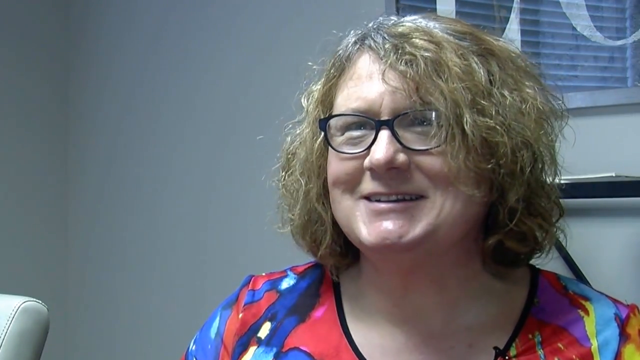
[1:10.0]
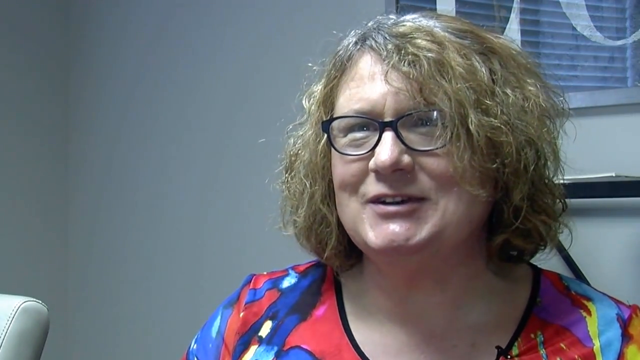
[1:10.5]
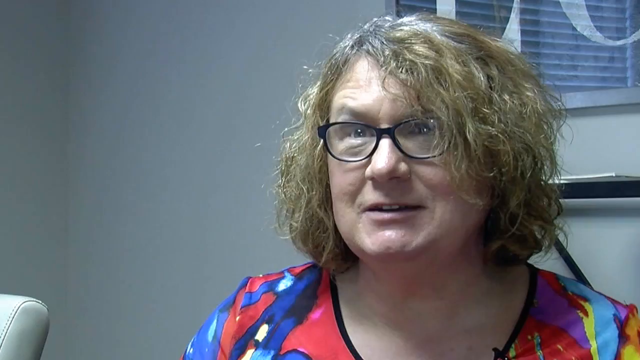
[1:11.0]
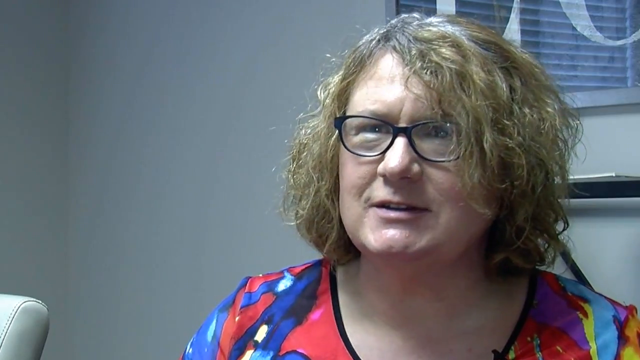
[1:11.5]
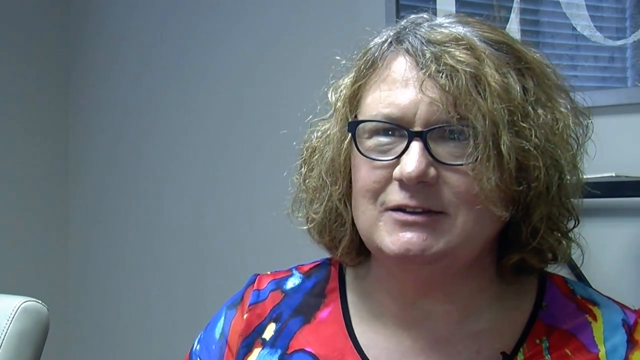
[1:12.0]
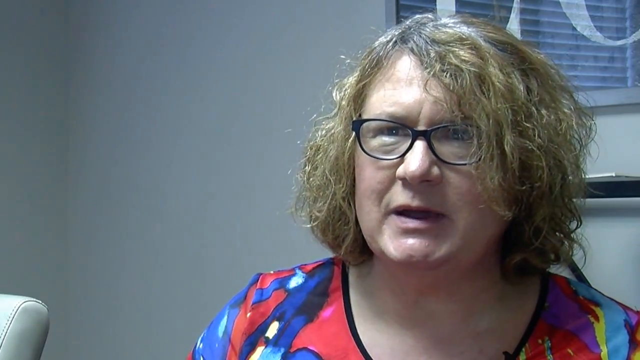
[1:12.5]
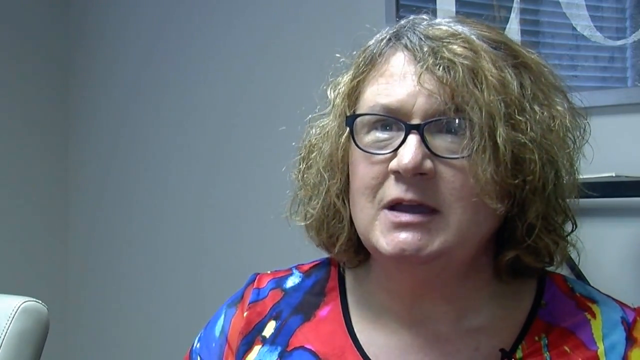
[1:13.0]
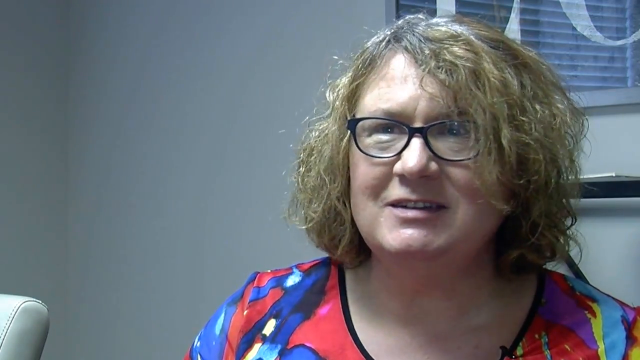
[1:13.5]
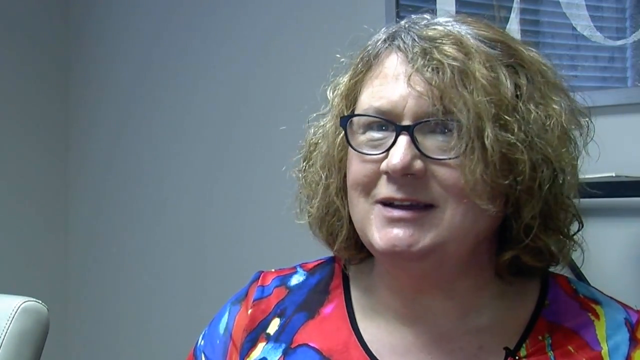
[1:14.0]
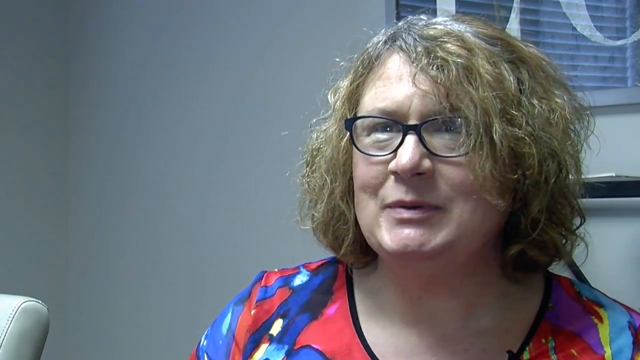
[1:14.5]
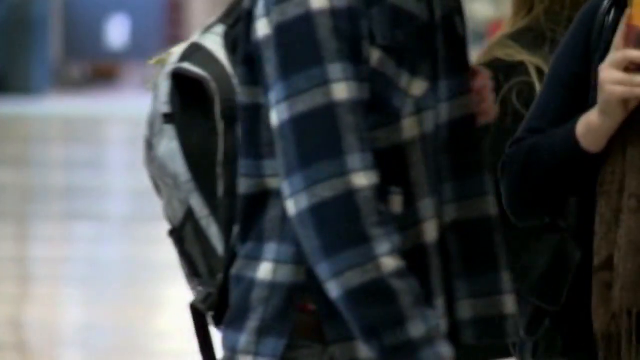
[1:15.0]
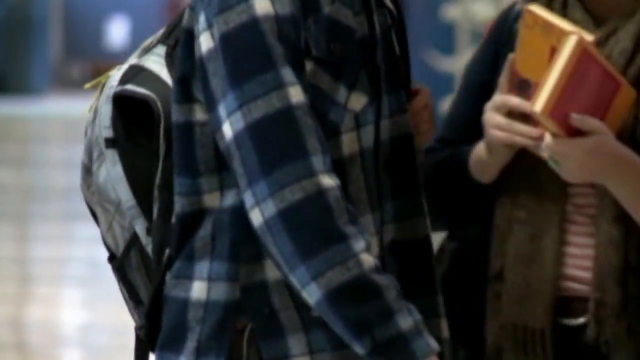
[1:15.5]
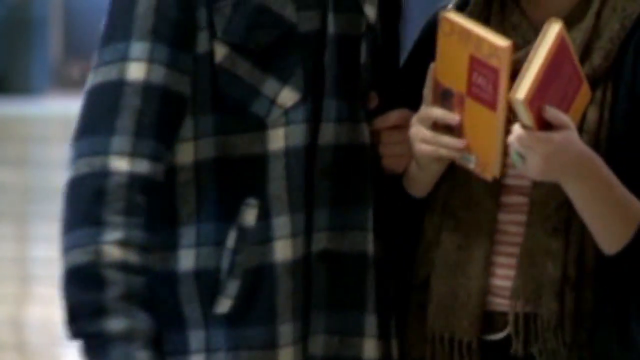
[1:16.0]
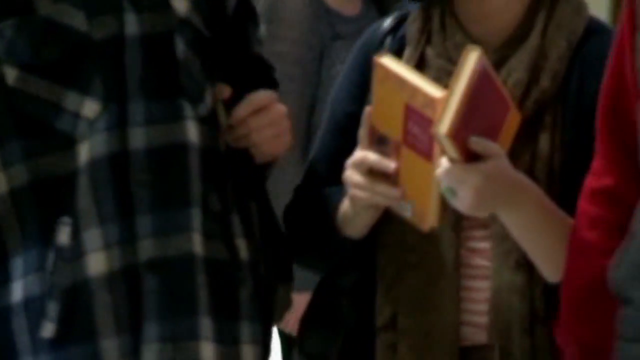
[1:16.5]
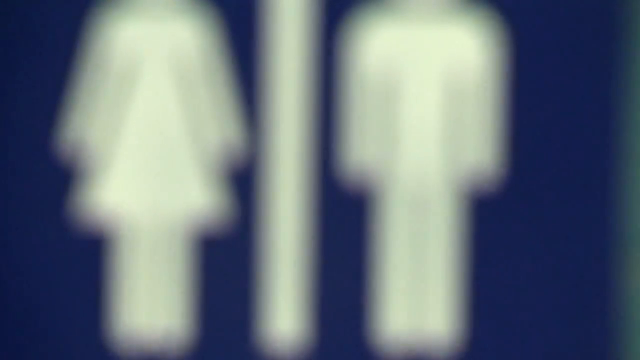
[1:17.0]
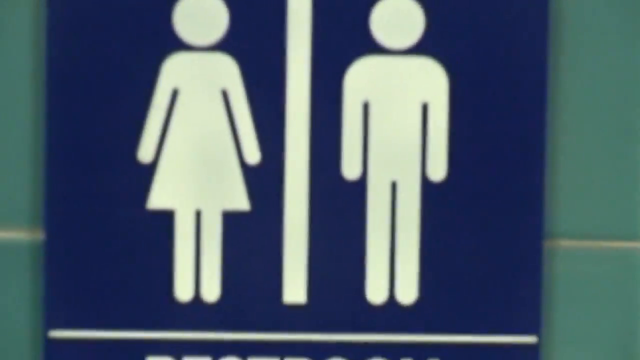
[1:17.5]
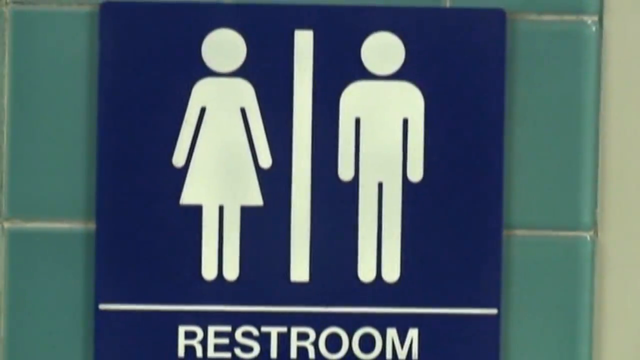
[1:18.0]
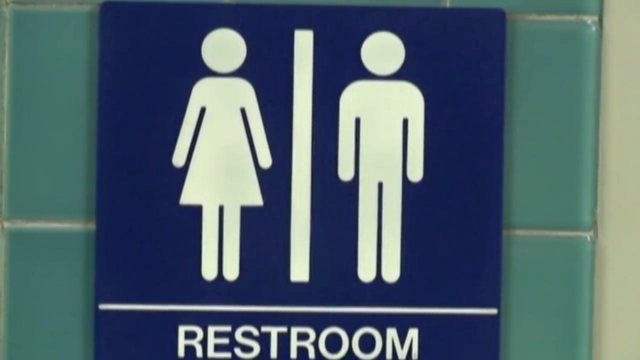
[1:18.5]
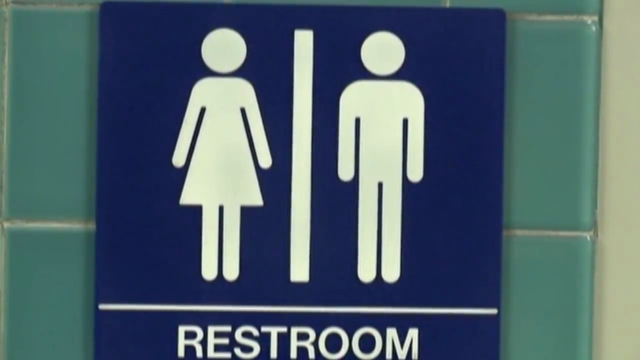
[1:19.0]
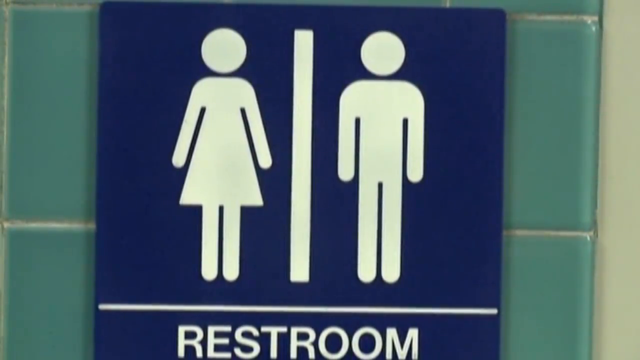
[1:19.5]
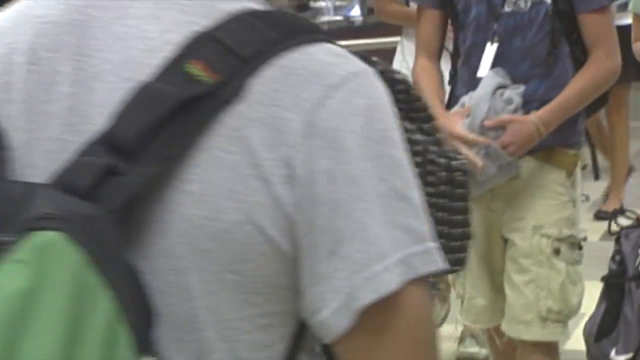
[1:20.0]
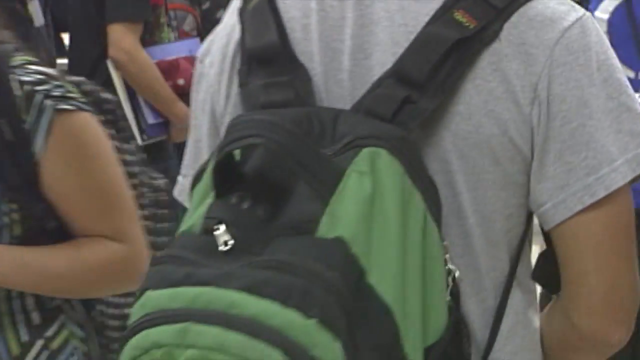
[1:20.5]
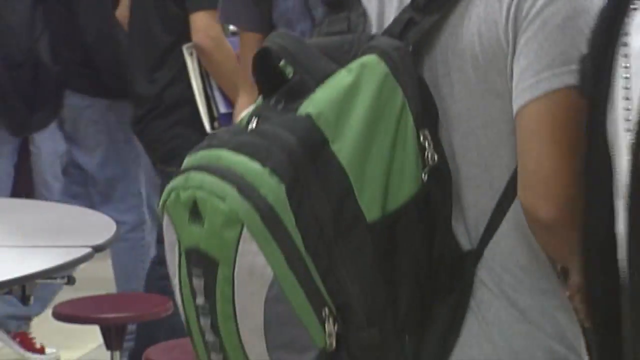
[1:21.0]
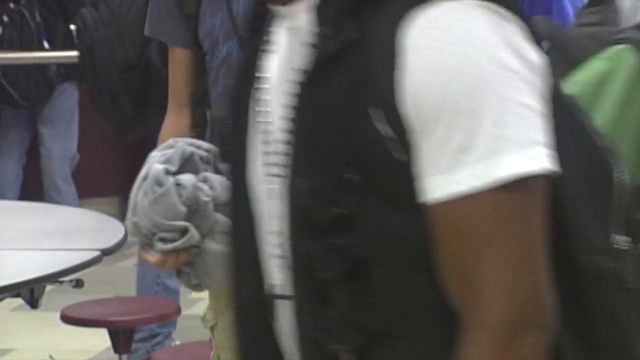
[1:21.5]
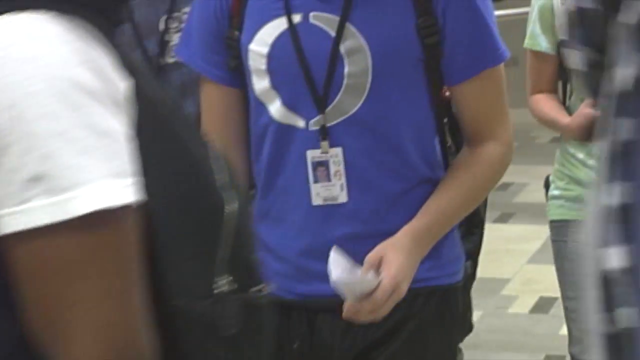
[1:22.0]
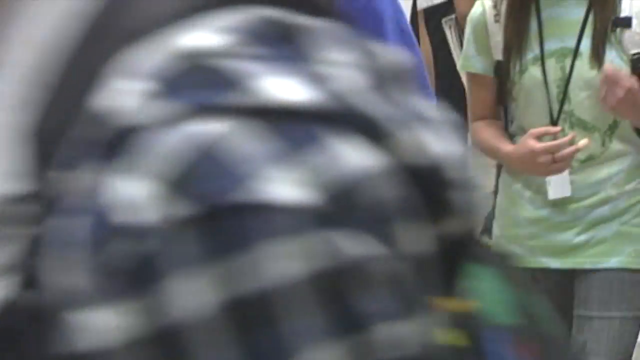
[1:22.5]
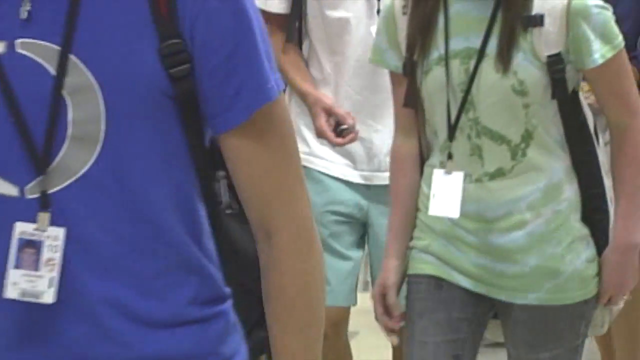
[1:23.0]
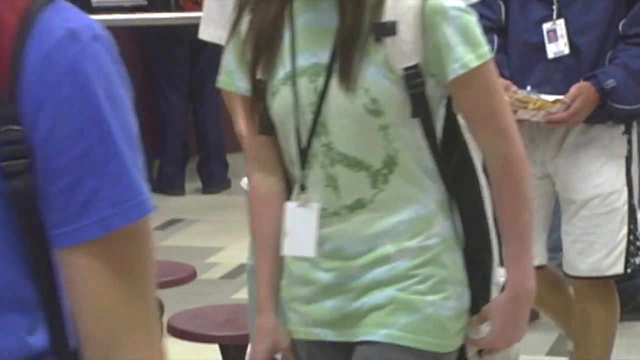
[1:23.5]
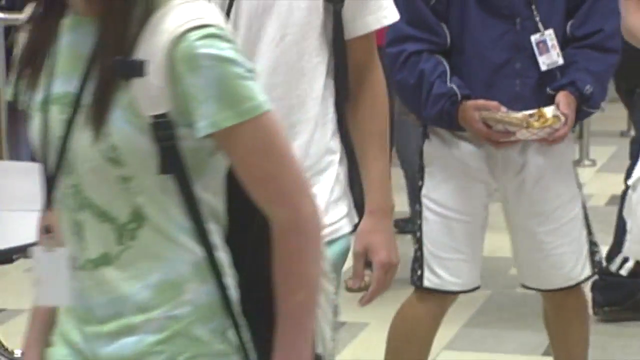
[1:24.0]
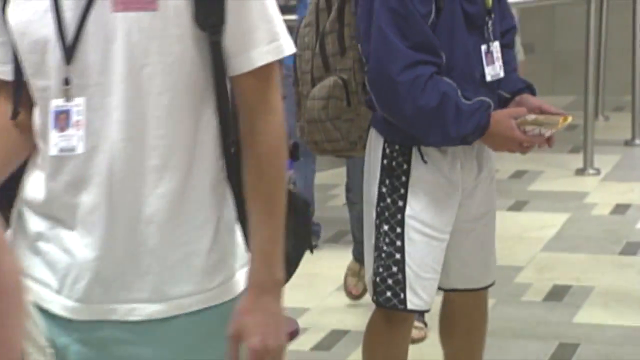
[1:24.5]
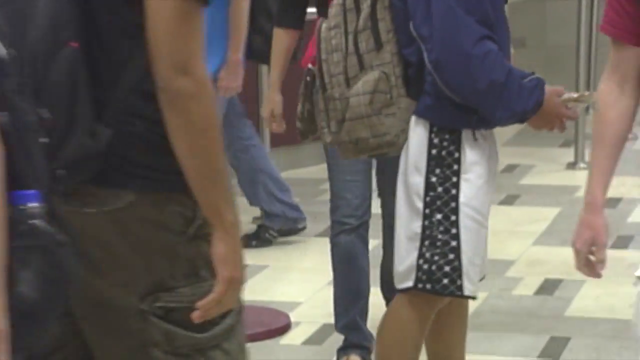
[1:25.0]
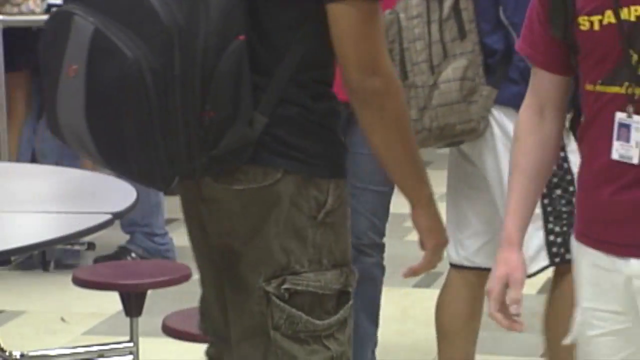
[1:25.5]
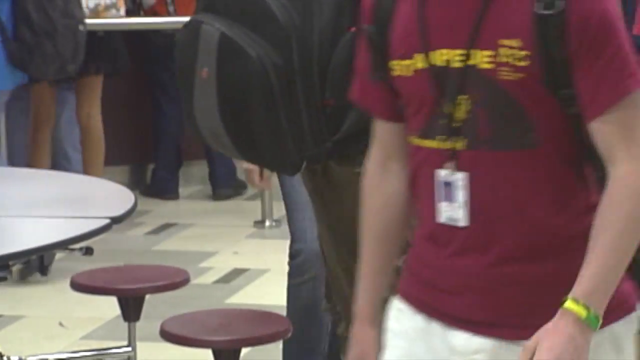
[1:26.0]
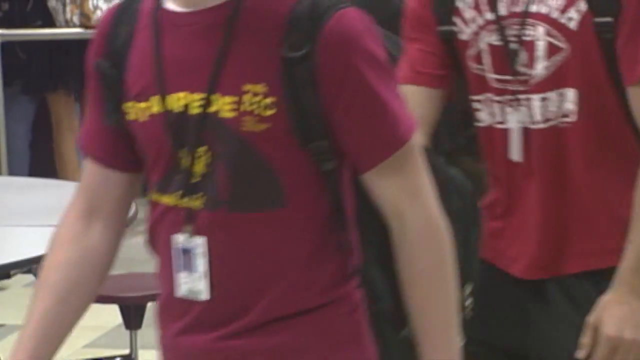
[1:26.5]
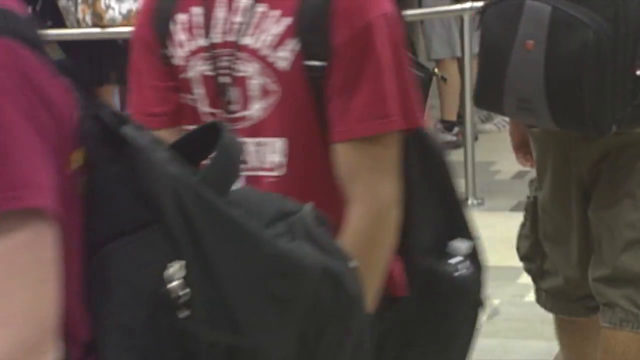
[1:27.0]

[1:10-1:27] The woman with short blonde and gray hair and glasses, in the multicolored shirt, continues talking to the person sitting across from her. The camera cuts to a shot of people walking, apparently in a school, with their heads and legs cropped out. A few people, presumably teenagers, walk wearing backpacks, with only their torsos and arms visible. One carries some books and one wears a blue plaid shirt; the person carrying books wears what looks like a scarf and a sweater. The camera then zooms in again on the restroom sign: the blue sign with male and female silhouettes that says "restroom." Next, there is another shot of people walking around in the school, seen from behind with their torsos and backpacks visible. Most of them wear what look like t-shirts and shorts or jeans, with backpacks and lanyards.